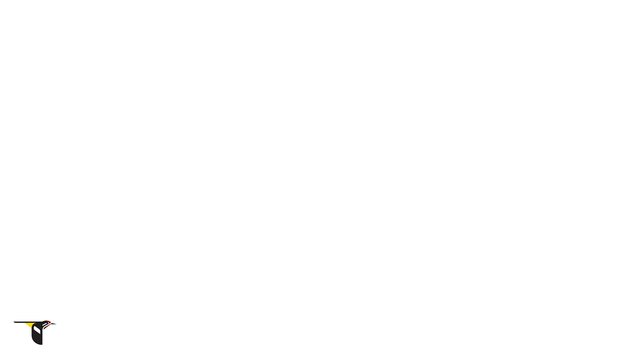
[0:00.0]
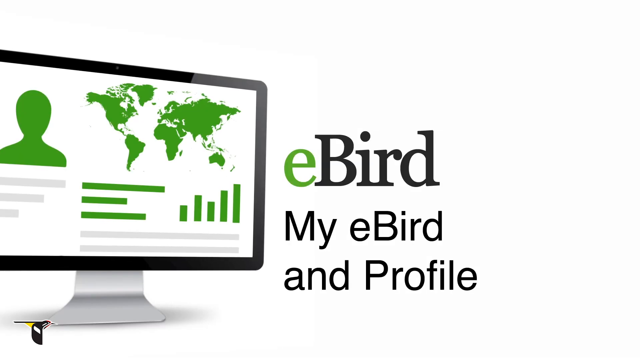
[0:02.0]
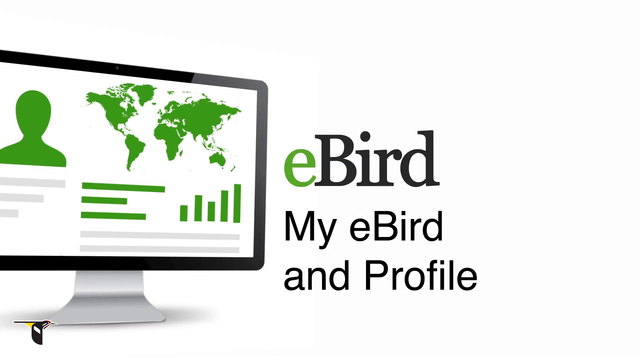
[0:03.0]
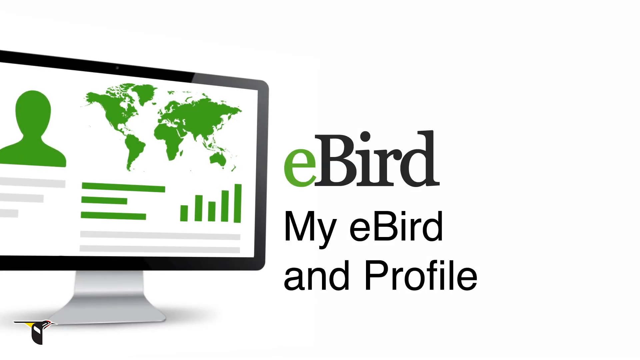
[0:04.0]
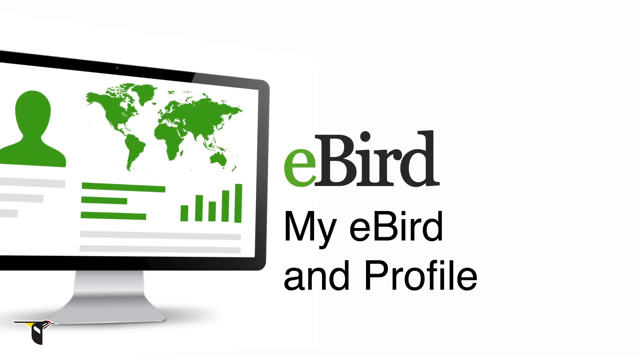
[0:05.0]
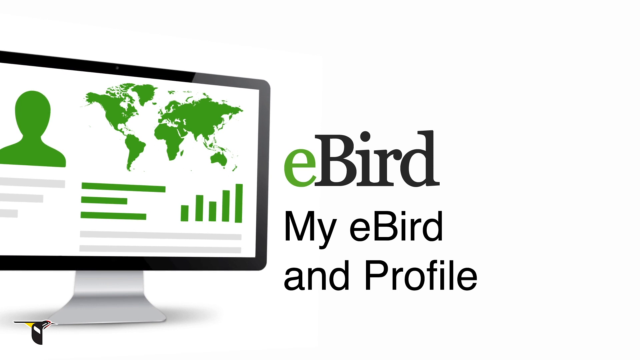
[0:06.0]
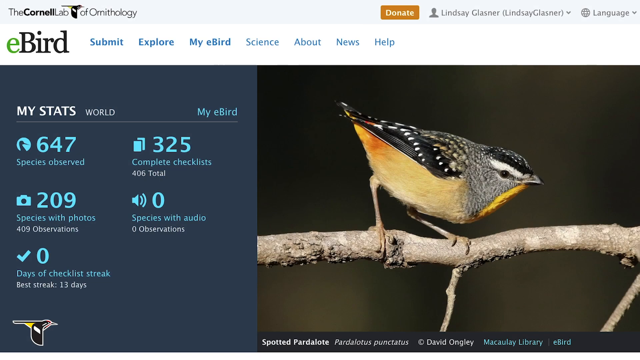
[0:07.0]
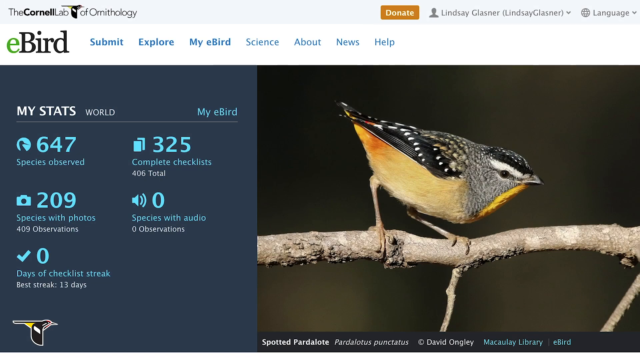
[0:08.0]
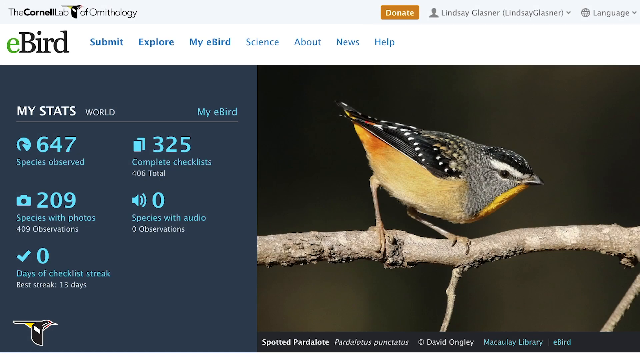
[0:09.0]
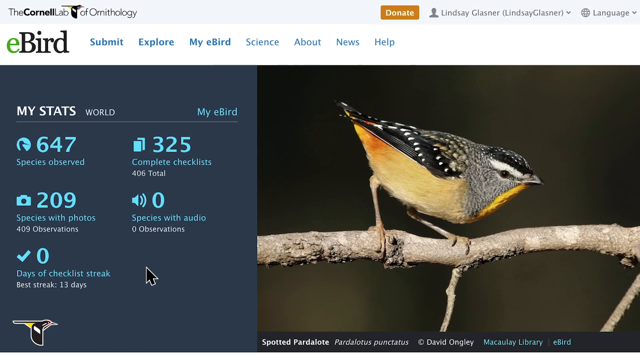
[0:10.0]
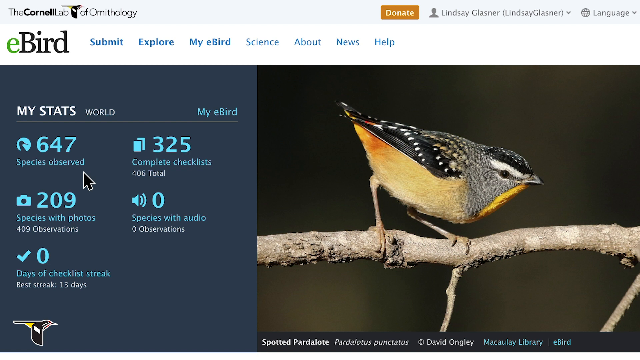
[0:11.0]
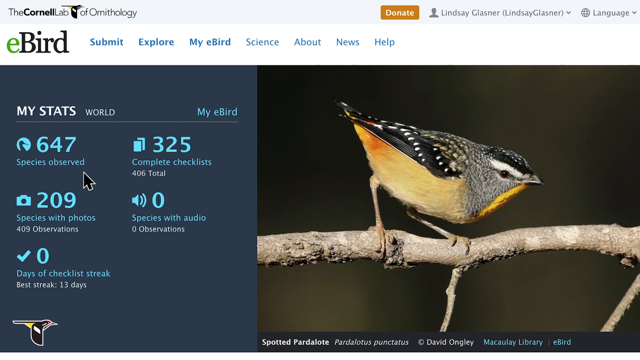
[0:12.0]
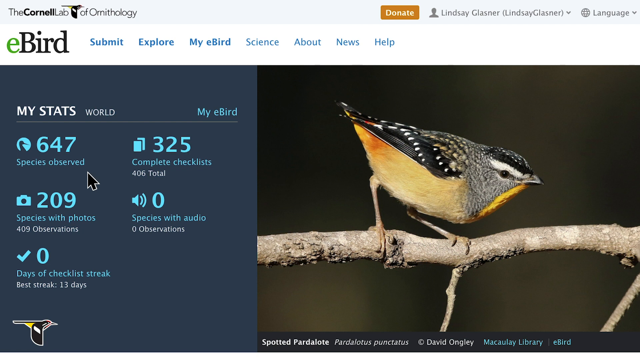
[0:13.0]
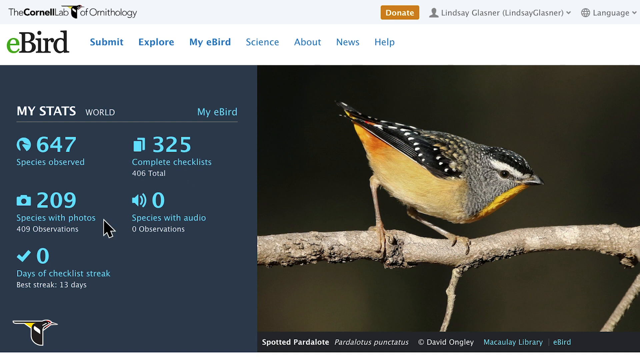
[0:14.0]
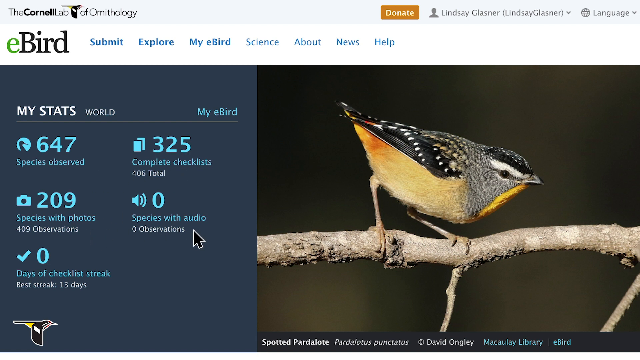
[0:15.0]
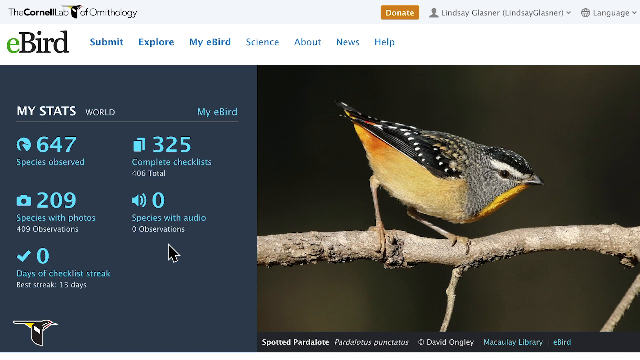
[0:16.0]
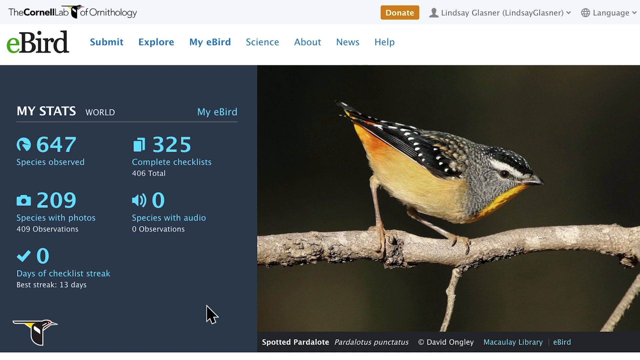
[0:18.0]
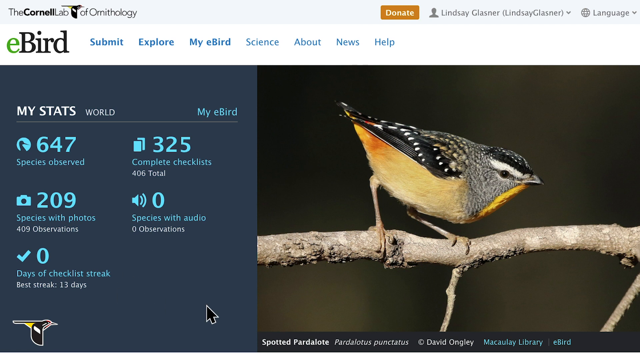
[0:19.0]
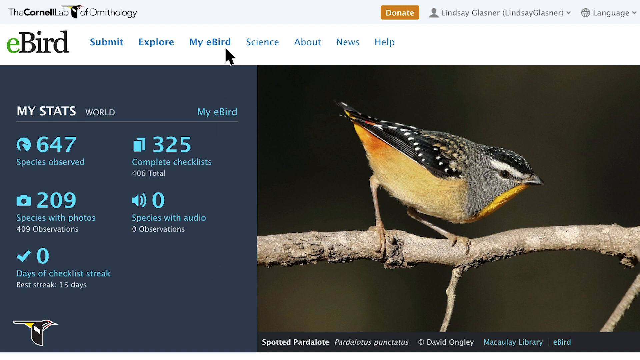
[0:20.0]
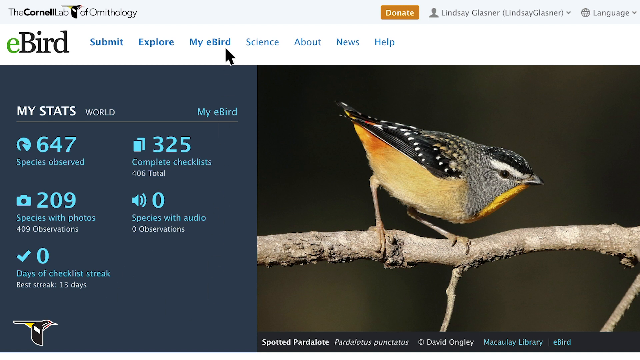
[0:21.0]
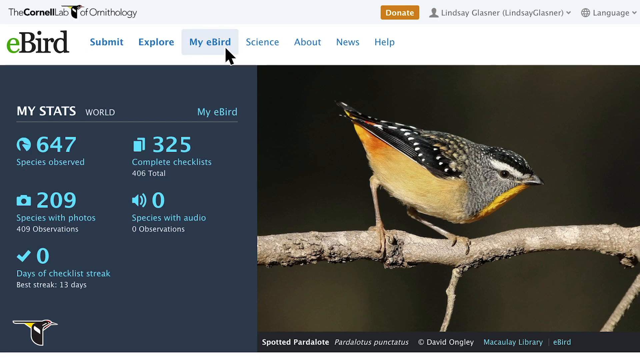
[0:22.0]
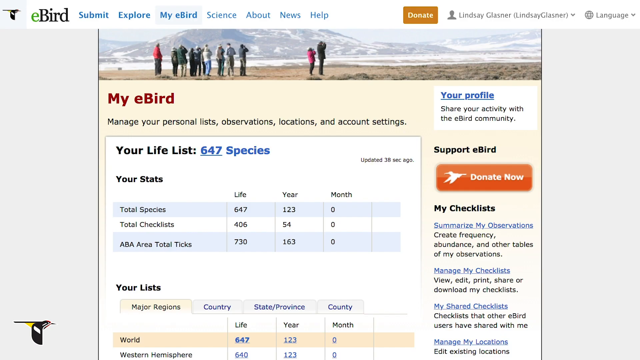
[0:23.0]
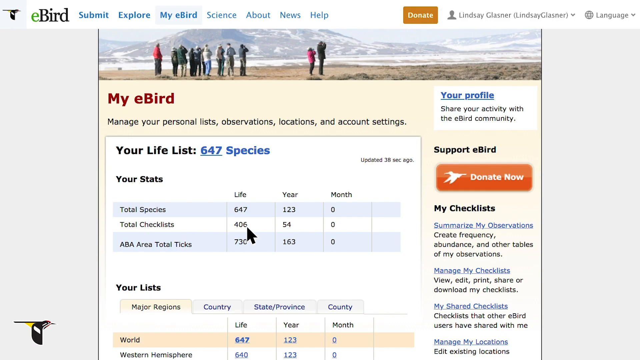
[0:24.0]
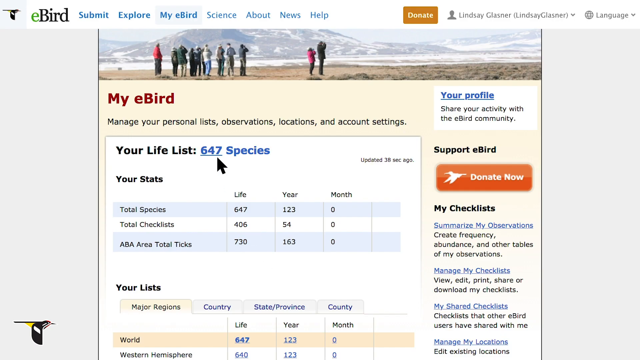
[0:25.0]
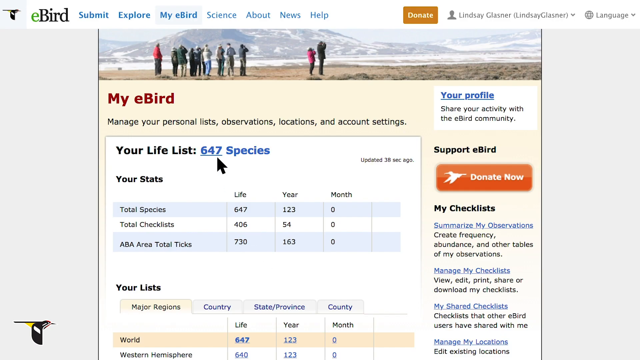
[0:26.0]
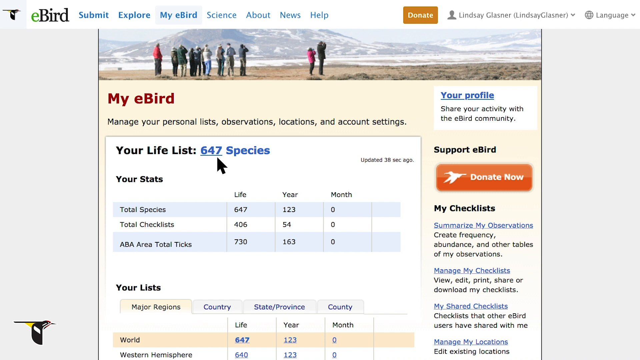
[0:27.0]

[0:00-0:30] The video opens on a white background, with a black border coming in from the left that goes about a third of the way across, then down to about an inch from the bottom, and then over. On it is a laptop screen showing an outline of a human head, with a map of the world to its right and bars beneath. To the right of this is a small green E and a big blue bird, and underneath it reads "my eBird" and "profile." The video then cuts to an eBird web page. At the top it reads "the Cornell Lab of Ornithology," with "eBird" below it, followed by seven clickable links; the profile, language and donate section is on the right side. Beneath "eBird" is a blue background reading "My Stats" with five sets of information, three down the left side and two on the right. On the right of the page a little bird sits on a tree branch. The cursor moves up to "Species Observed," which shows "647" beneath it, and points back and forth at each of the sections. The cursor then goes up to "My eBird" and clicks it, opening a page with a picture of people standing in front of a mountain range, most of them on the left side and two just right of center. Below the picture it reads "My eBird," then "your life list" with stats information underneath. On the right side is "support eBird" with a big donate button and some information beneath it.